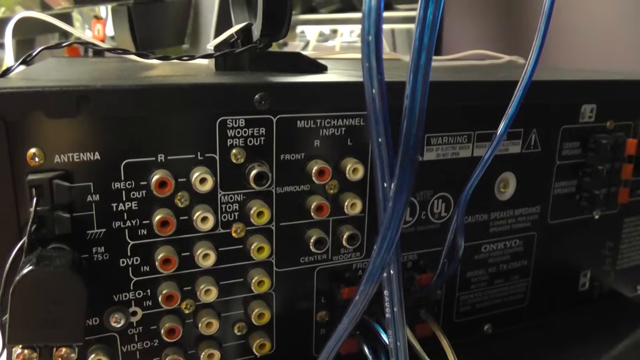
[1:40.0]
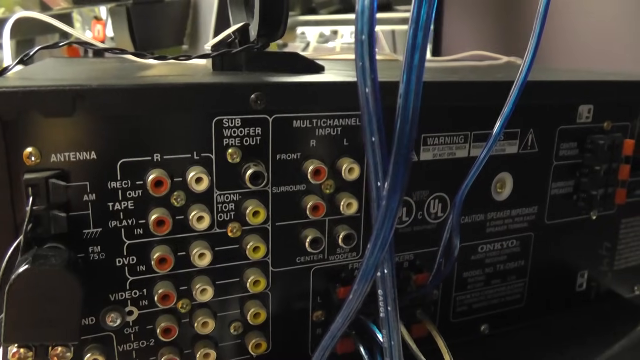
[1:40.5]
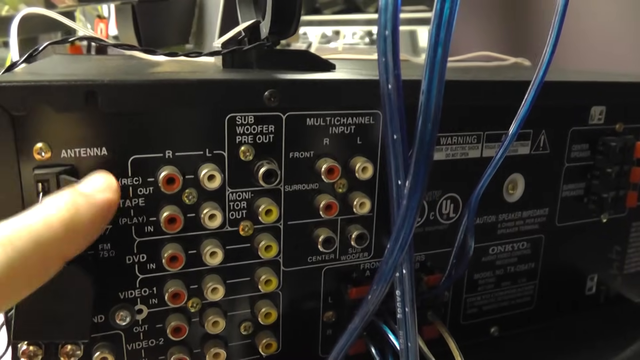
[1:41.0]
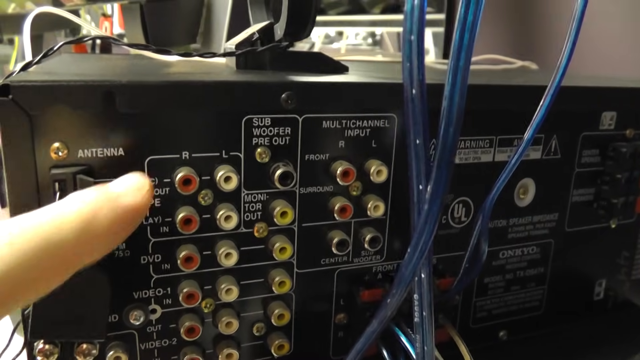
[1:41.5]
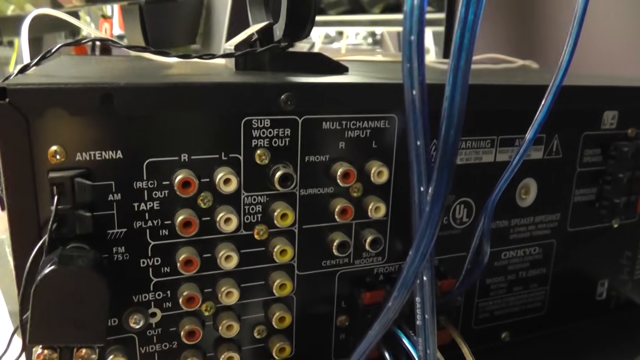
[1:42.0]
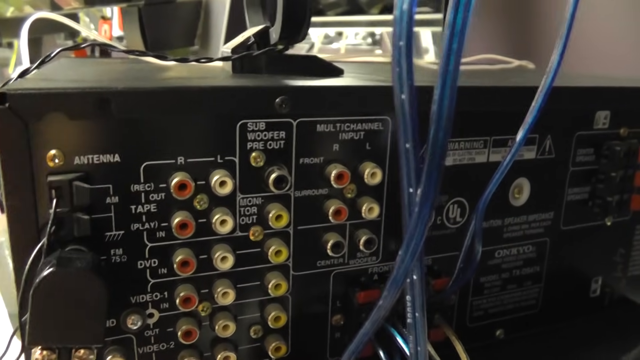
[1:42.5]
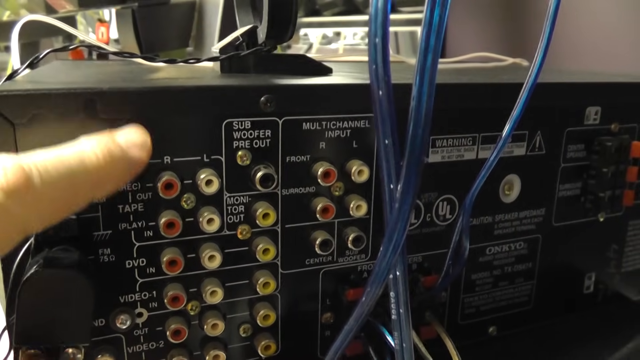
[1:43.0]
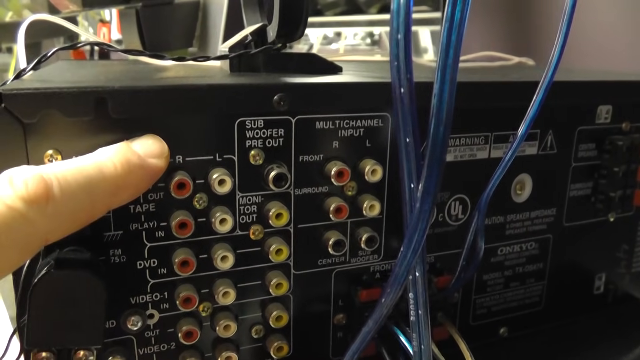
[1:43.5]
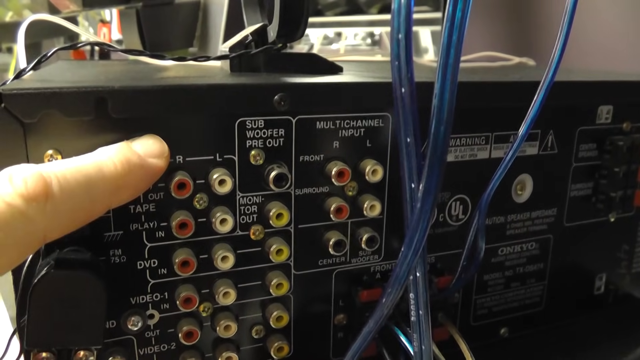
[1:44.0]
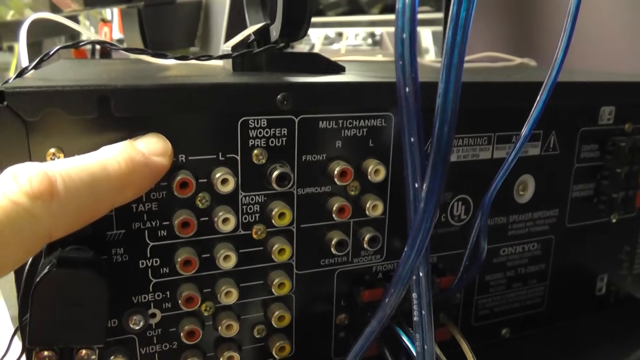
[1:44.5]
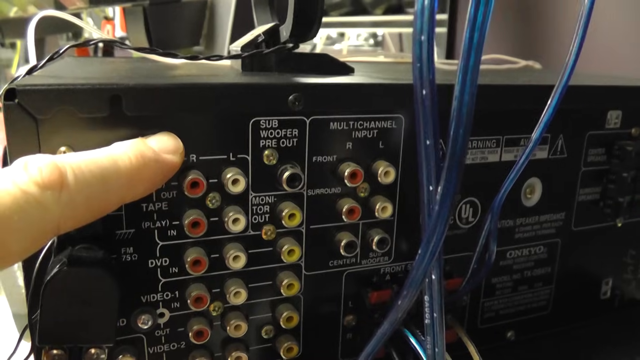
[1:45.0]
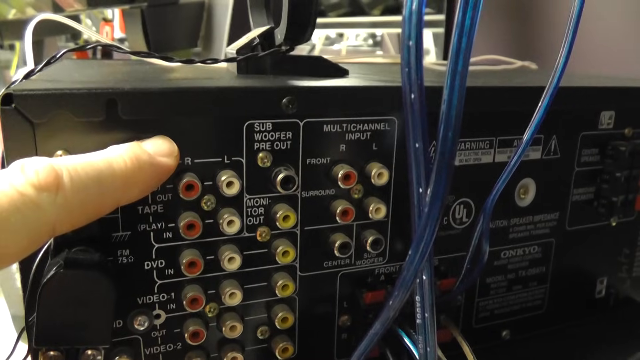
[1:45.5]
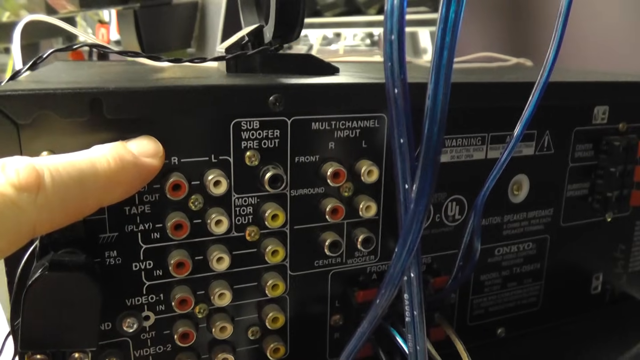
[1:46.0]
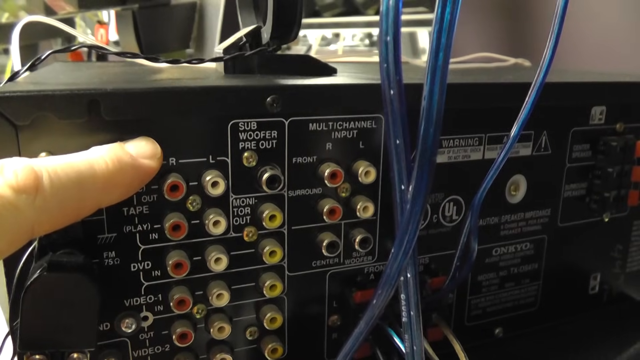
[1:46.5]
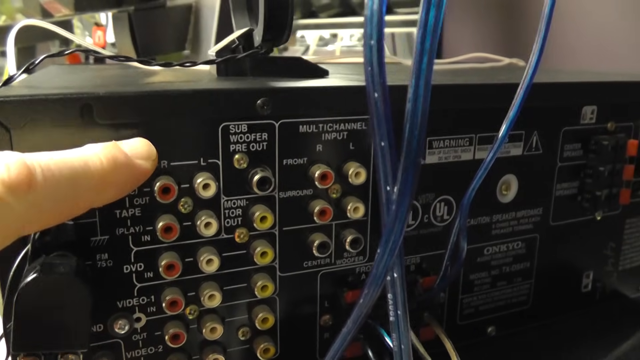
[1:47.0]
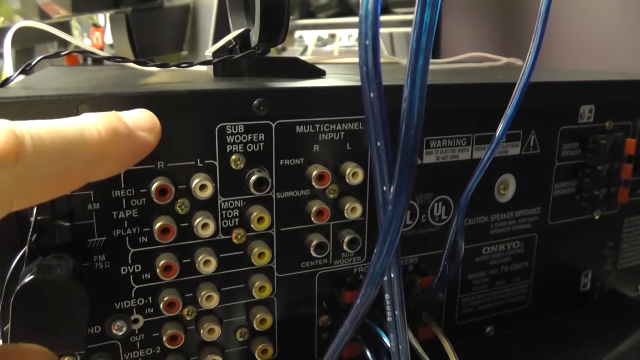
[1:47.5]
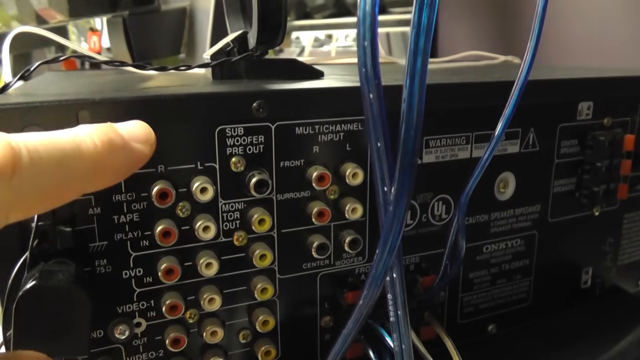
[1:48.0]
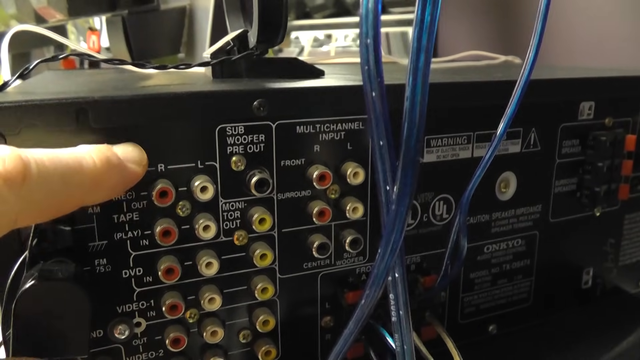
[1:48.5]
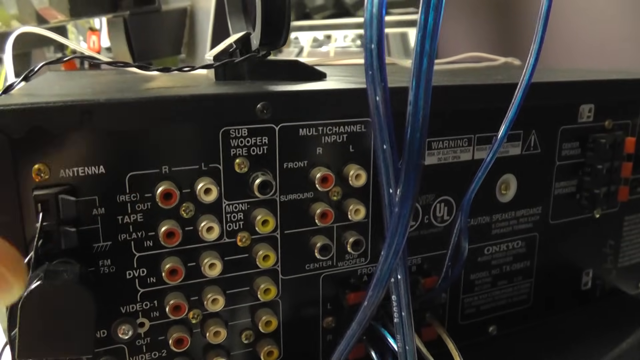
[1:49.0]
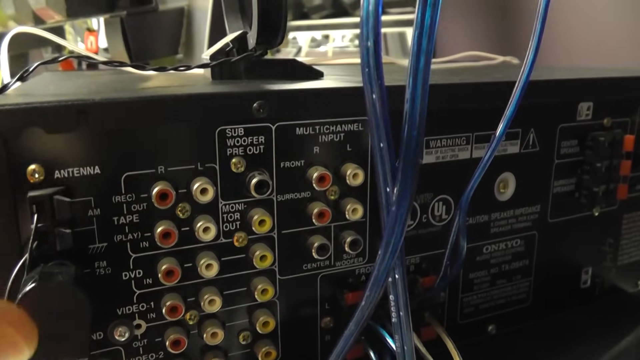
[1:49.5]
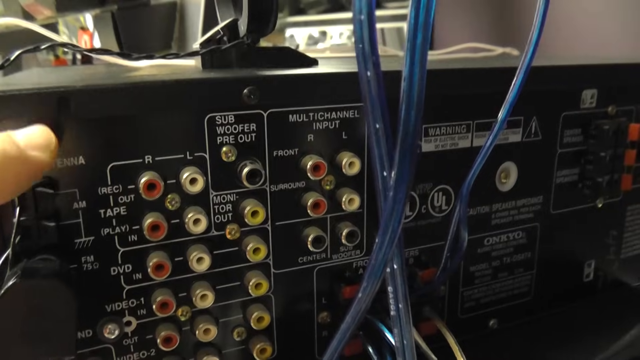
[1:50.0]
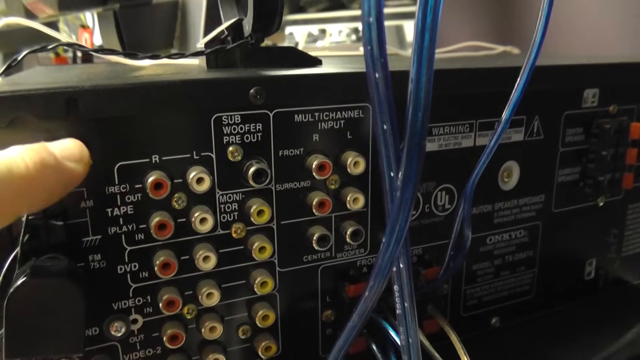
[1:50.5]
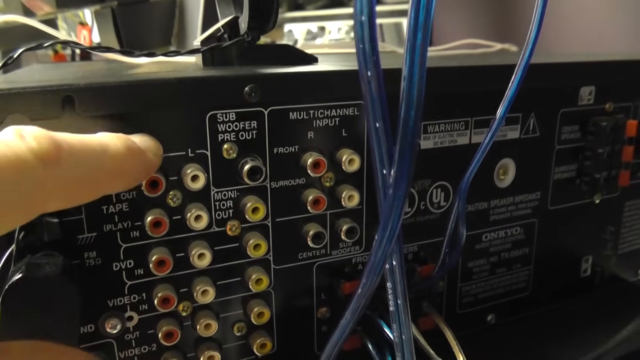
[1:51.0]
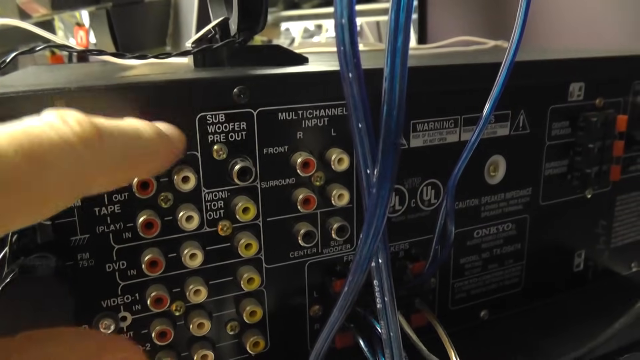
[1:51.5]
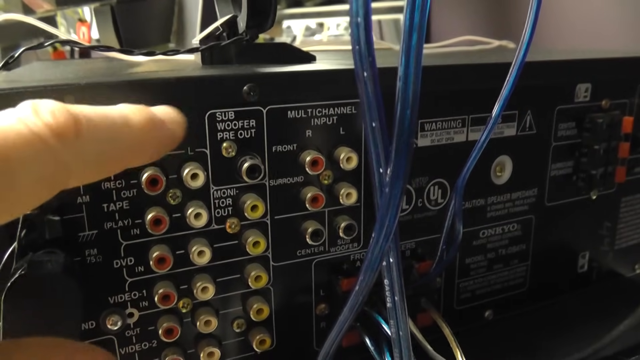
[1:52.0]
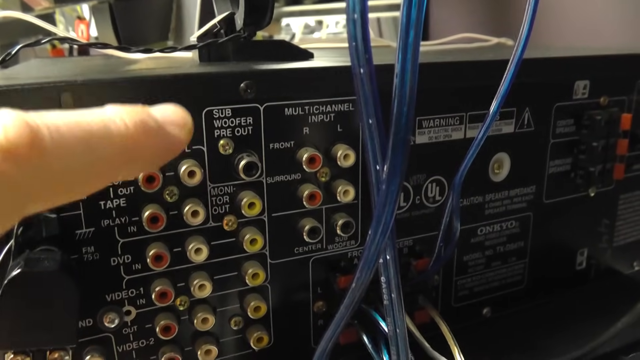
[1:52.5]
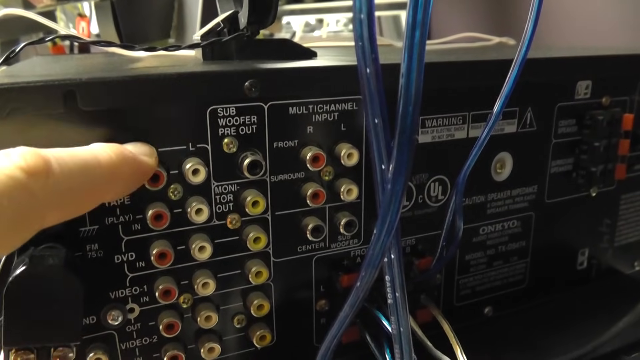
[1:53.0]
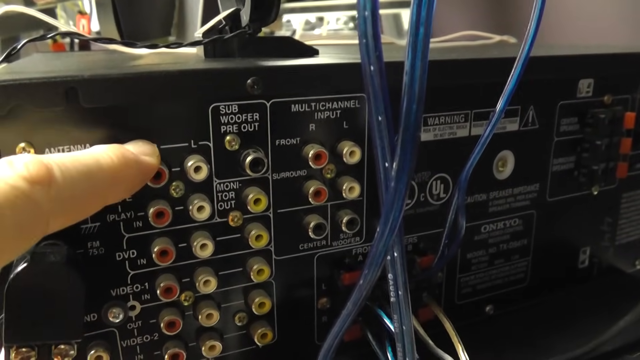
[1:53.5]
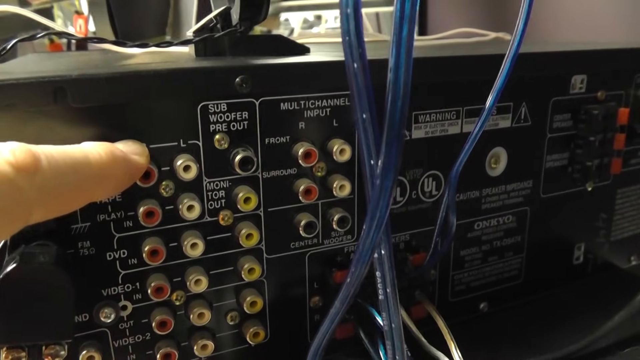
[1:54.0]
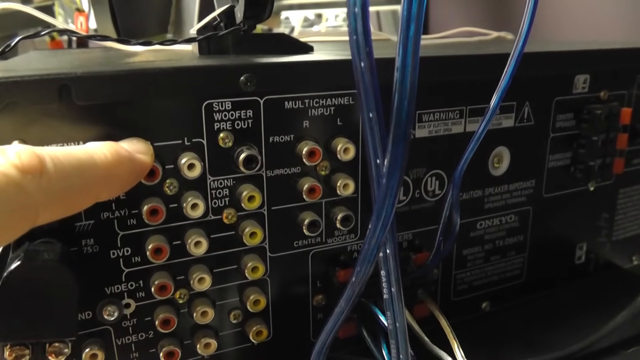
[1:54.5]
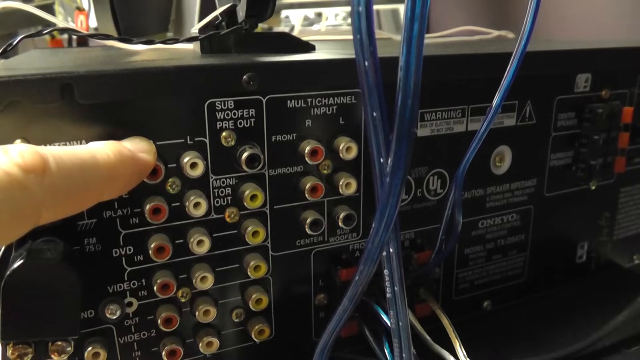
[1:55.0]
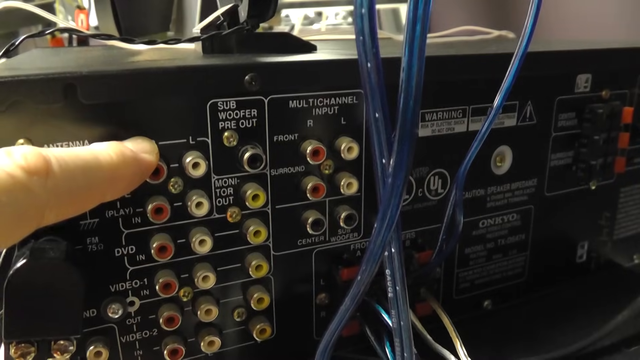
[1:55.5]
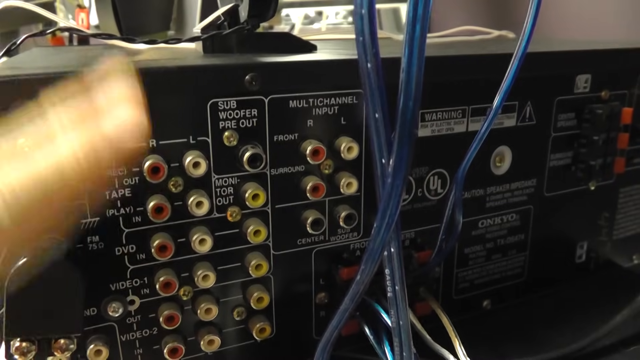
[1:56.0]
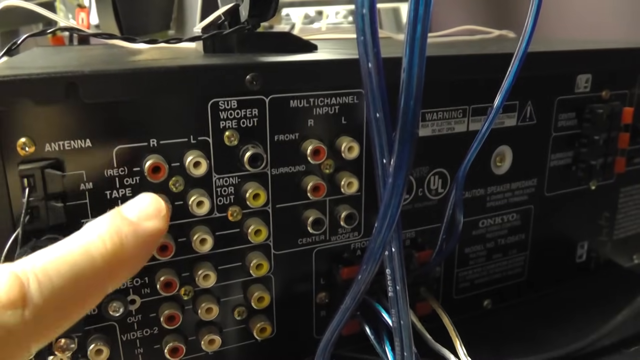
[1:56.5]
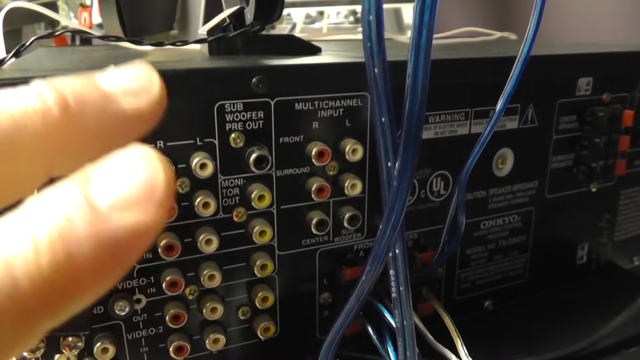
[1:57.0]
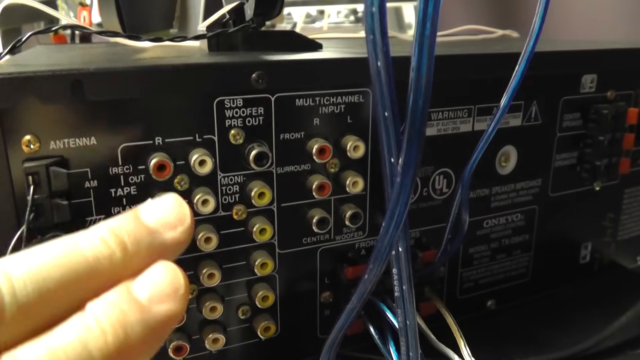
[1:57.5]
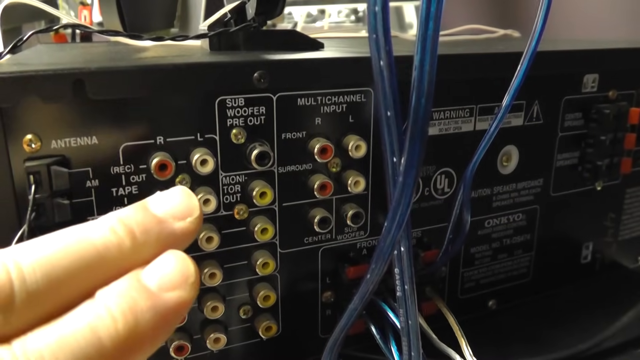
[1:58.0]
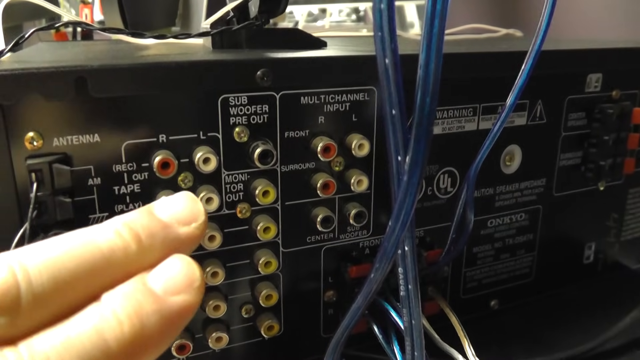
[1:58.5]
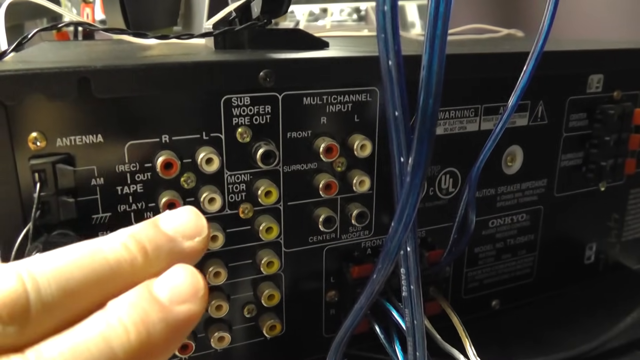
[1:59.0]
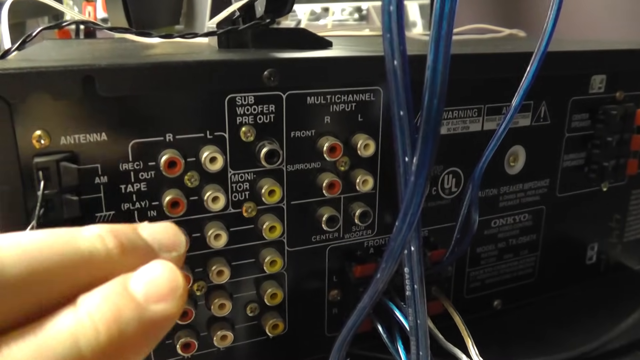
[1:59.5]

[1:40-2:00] He continues pointing to the right side of the row of plug-ins, concentrating on the red areas on the right, and taps his finger to the arm three times. He then points more, more fingers of that hand are visible, and he moves the hand up and down. Back at the antenna area, it says "AM" with a bunch of little squiggly lines and "FM, 75G", with "antenna" at the top of that area. To the left is a round, circular silver screw that holds the object in place. Panning to the right, there is another screw, a black one toward the top, keeping the back panel on. There is "multi-channel input" and two silver plug-ins with "right" and "left" on them. Underneath that is writing with a red plug-in and another white plug-in, and below that are two silver plug-ins.